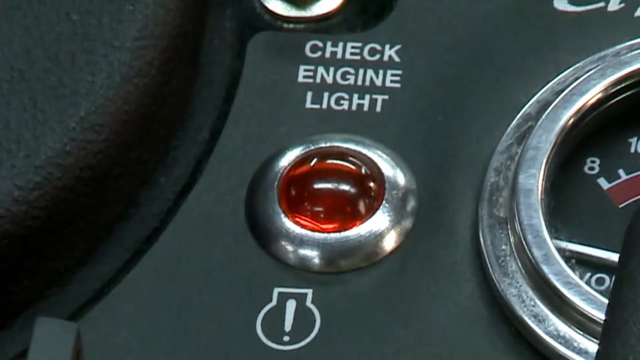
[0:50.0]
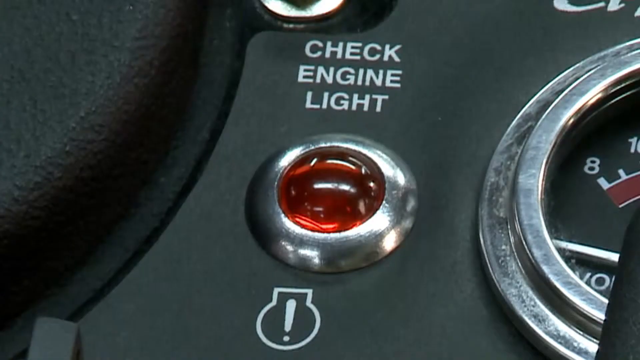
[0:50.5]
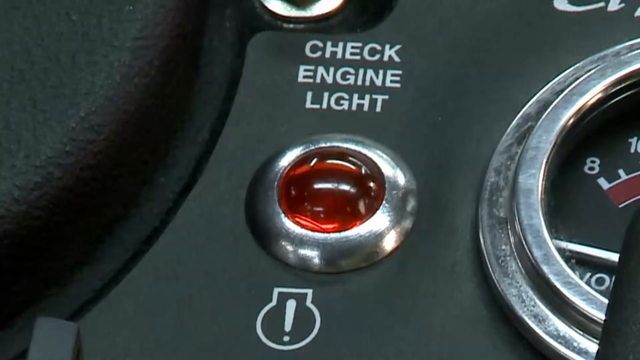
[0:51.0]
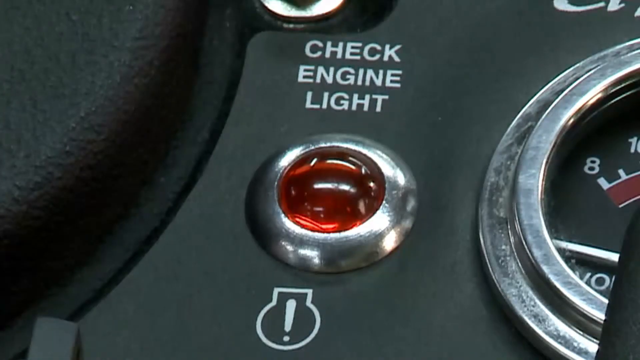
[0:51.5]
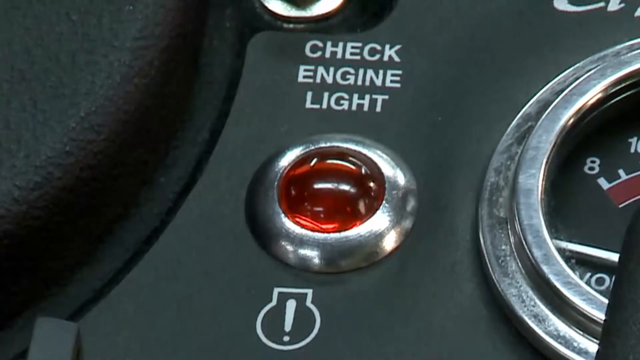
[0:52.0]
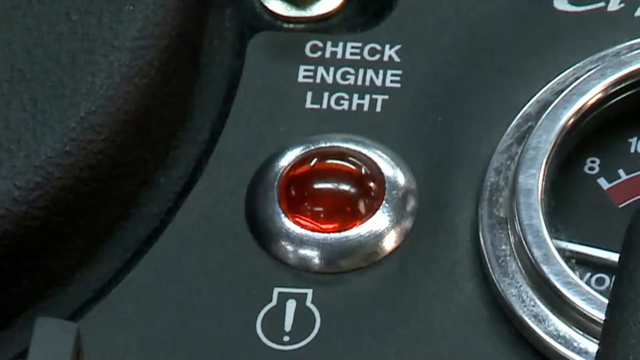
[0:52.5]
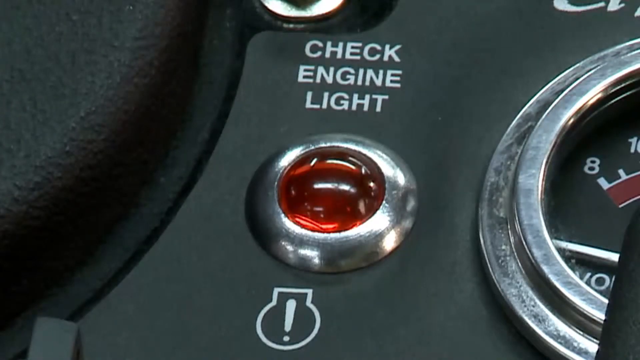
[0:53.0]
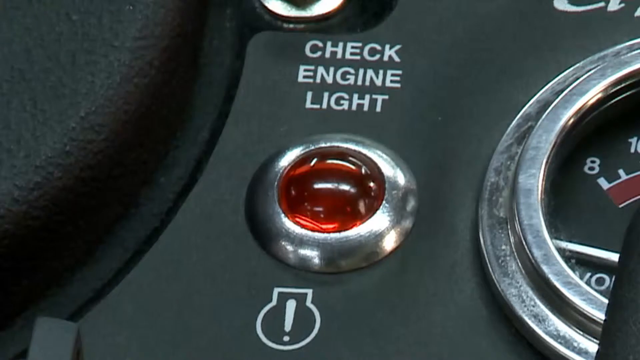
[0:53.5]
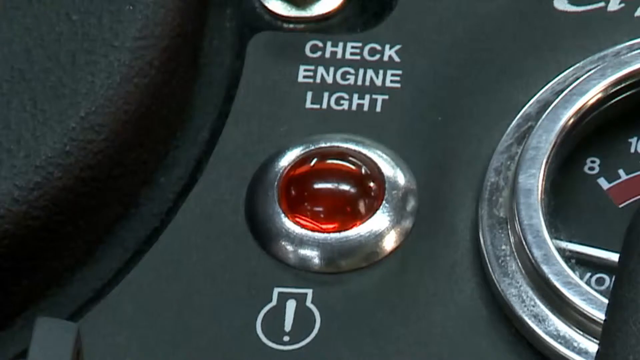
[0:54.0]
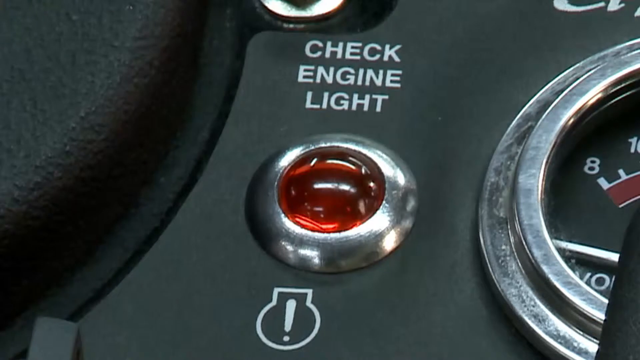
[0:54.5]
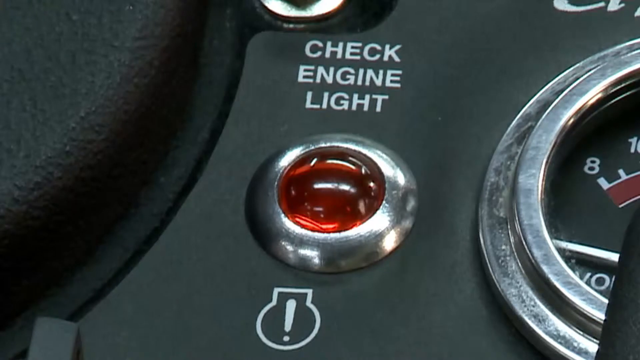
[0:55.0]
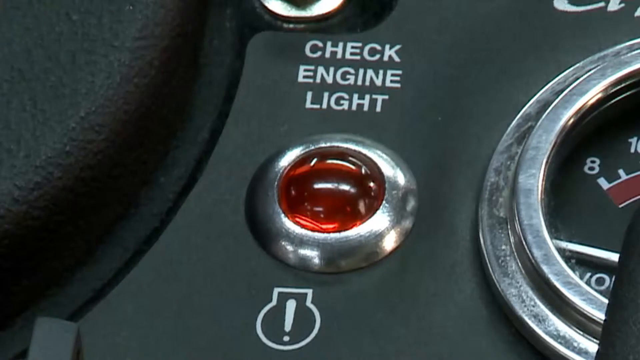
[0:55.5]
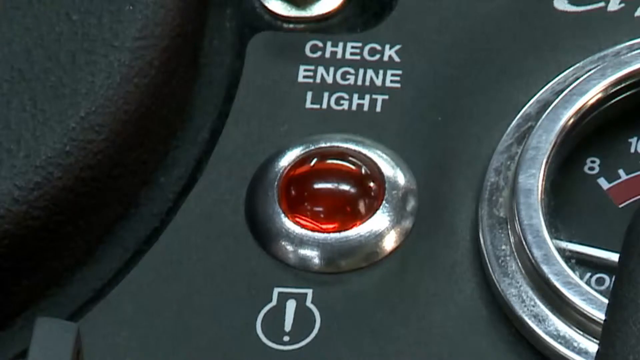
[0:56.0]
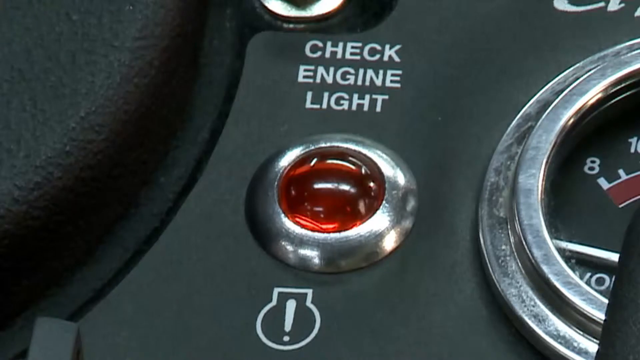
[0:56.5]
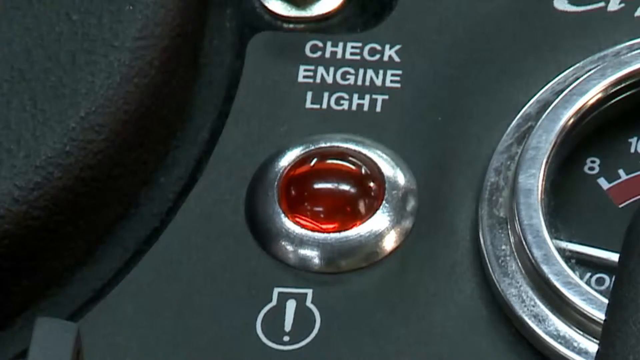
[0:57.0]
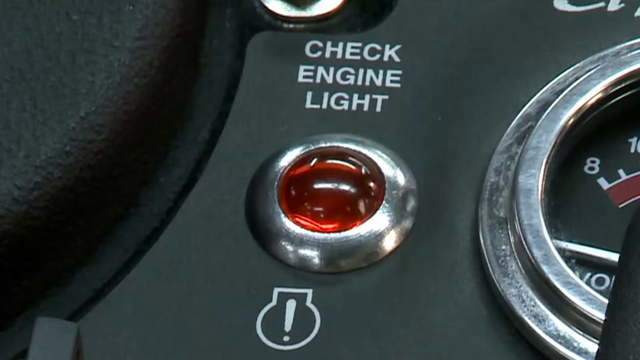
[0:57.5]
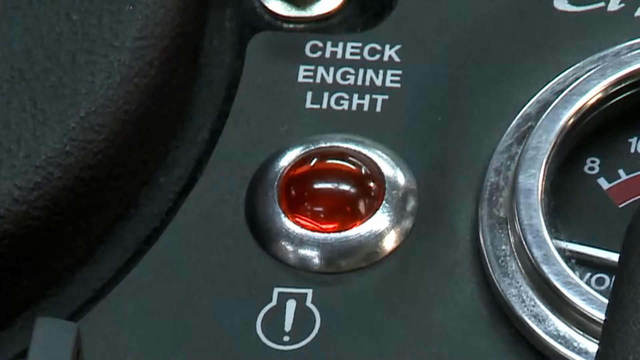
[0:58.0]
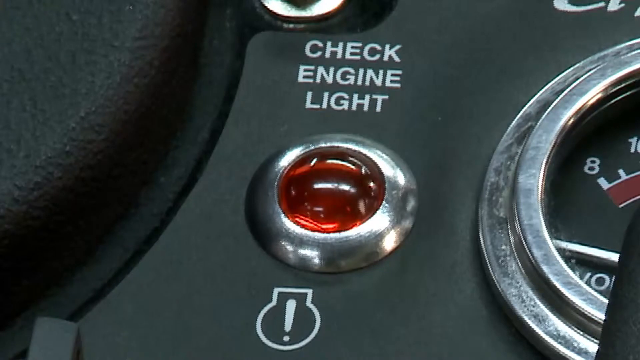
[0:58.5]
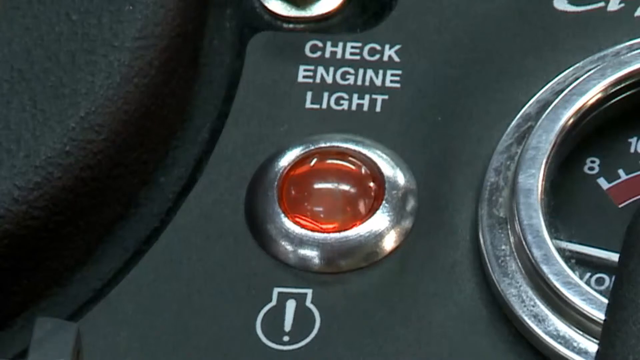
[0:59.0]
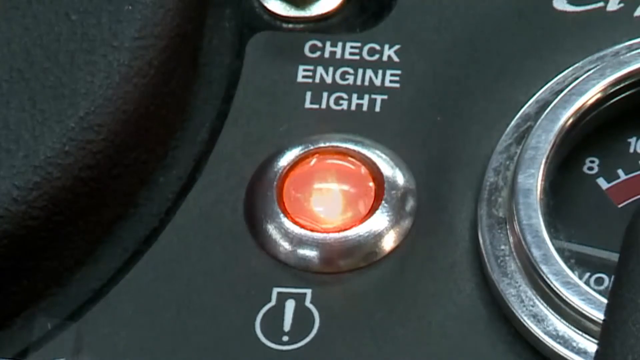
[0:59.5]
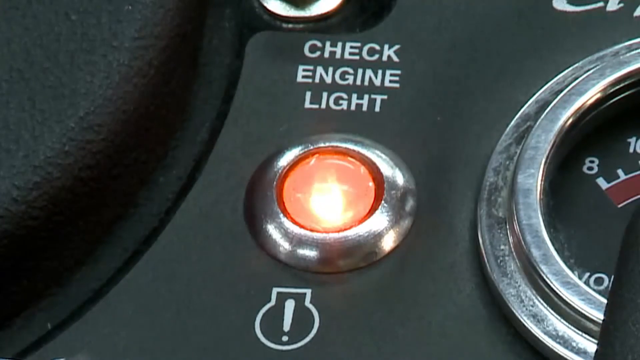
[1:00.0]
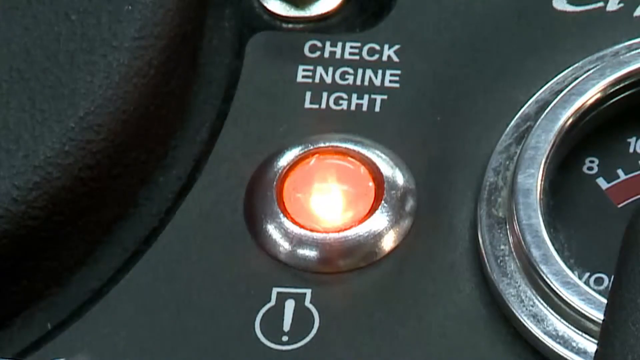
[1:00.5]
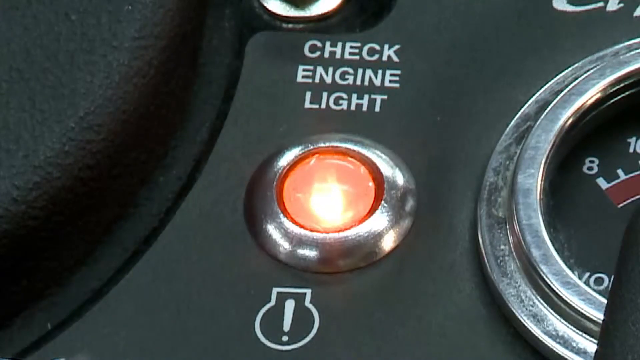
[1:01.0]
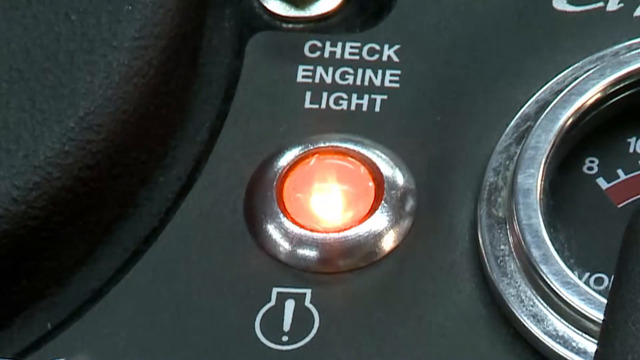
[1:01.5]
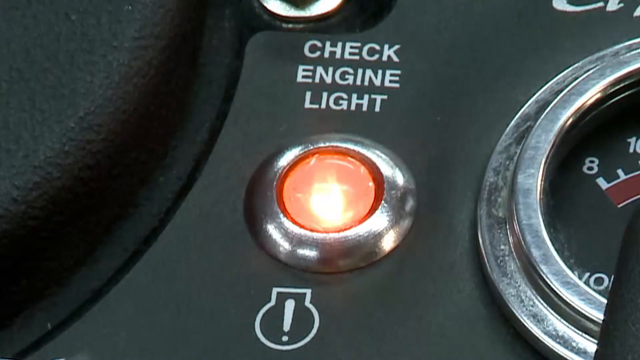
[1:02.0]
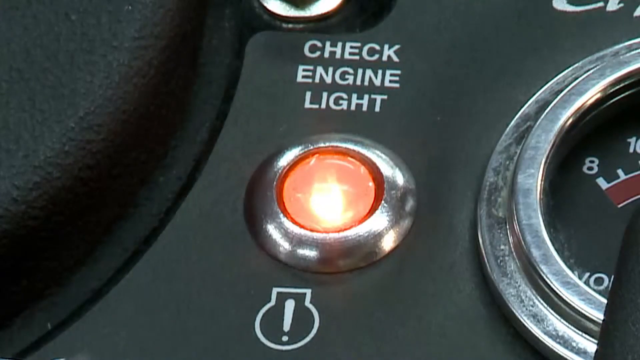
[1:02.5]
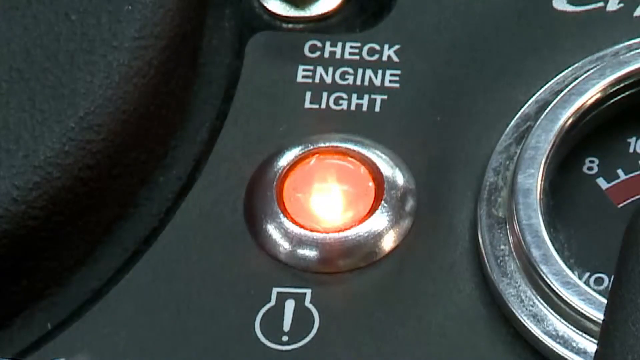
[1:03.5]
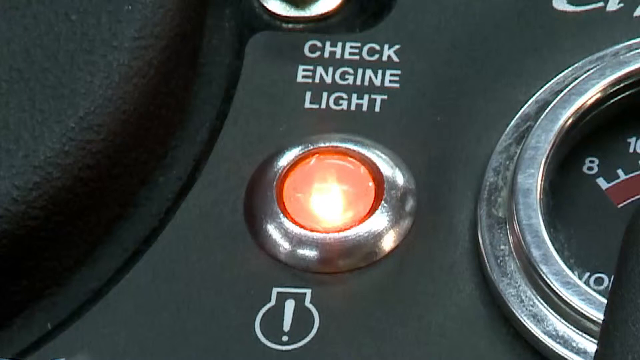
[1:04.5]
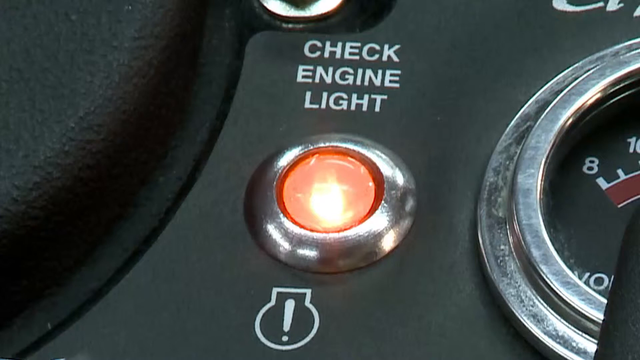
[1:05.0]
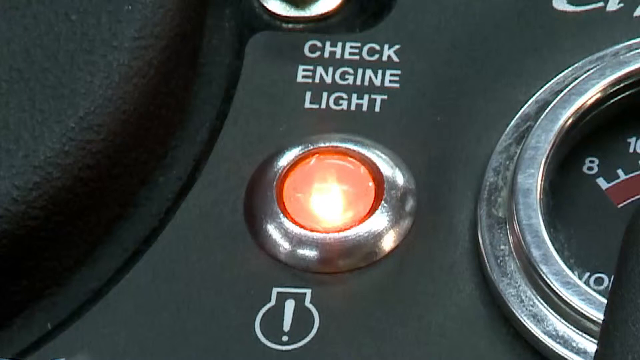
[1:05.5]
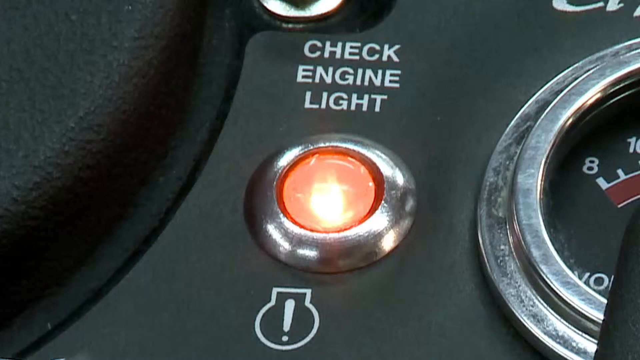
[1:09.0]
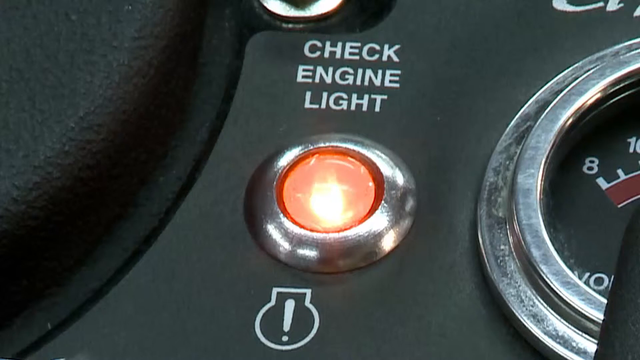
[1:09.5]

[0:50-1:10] The scene moves inside an old-school vehicle, where the check engine light is shown. It is a little circle that says "check engine" with the symbol underneath the circle. At first the light does not look like it is on; then it turns on and glows a bright orange, or reddish orange.